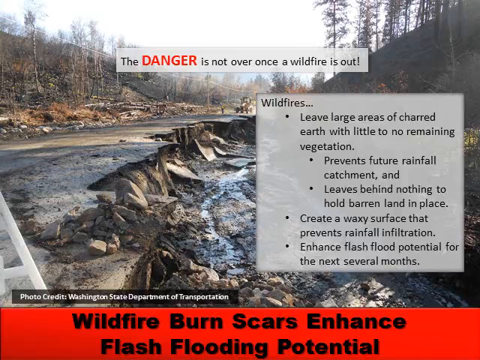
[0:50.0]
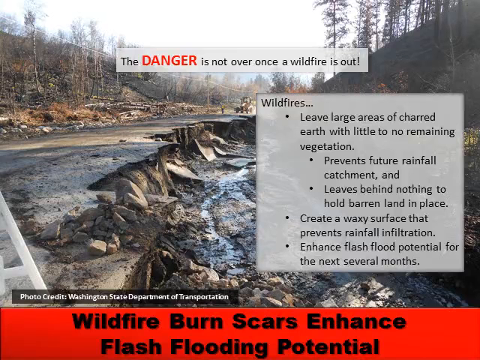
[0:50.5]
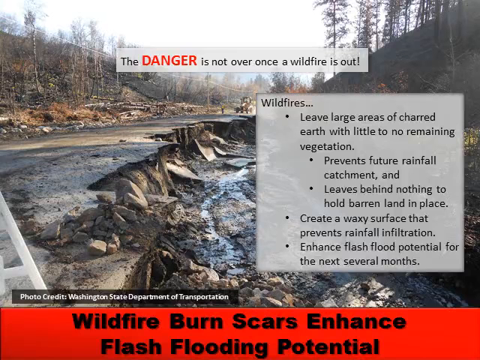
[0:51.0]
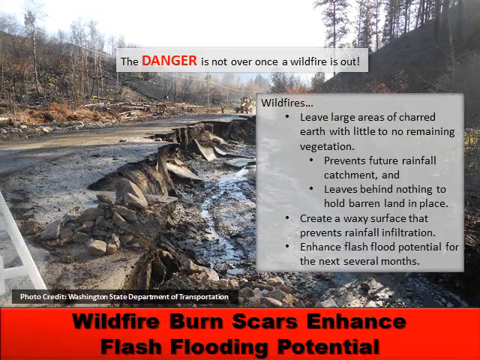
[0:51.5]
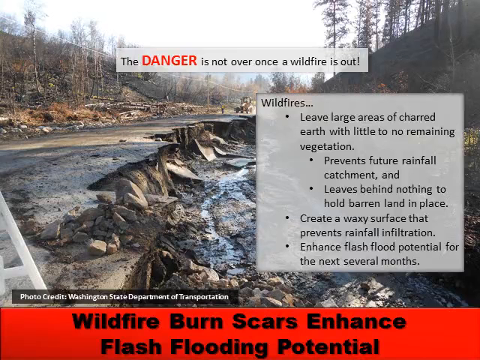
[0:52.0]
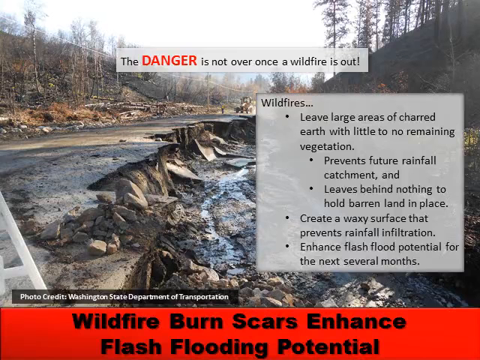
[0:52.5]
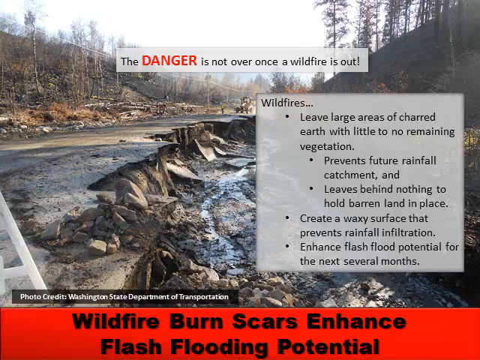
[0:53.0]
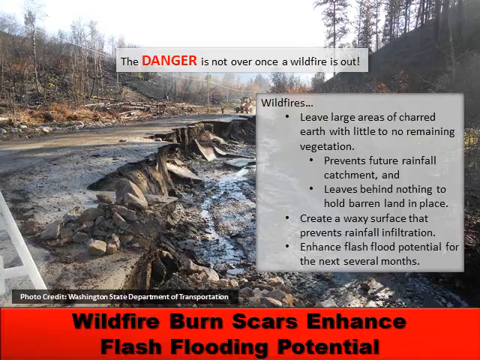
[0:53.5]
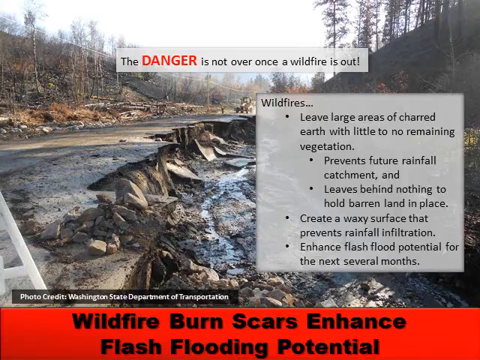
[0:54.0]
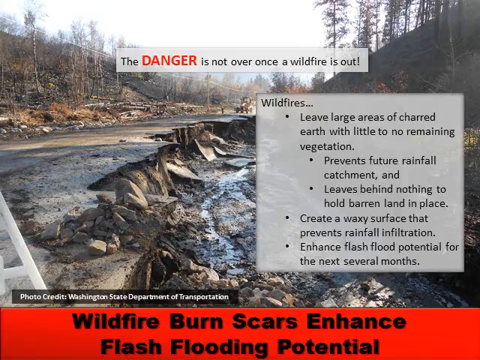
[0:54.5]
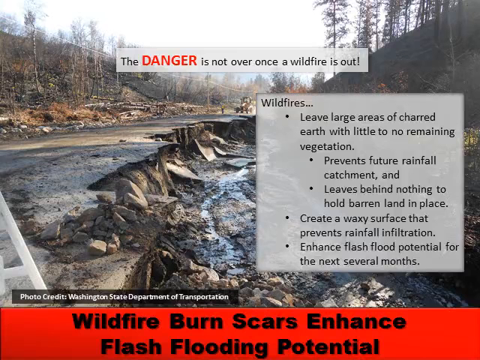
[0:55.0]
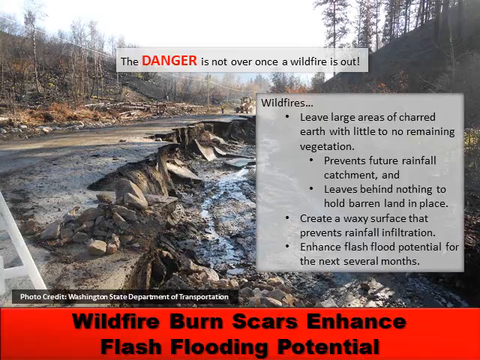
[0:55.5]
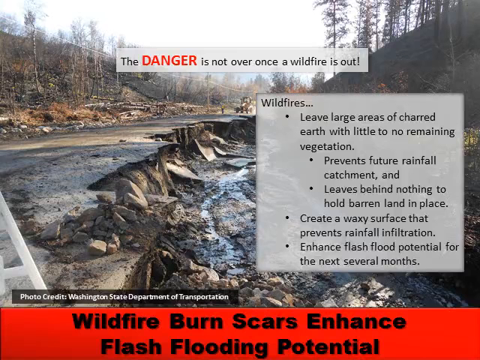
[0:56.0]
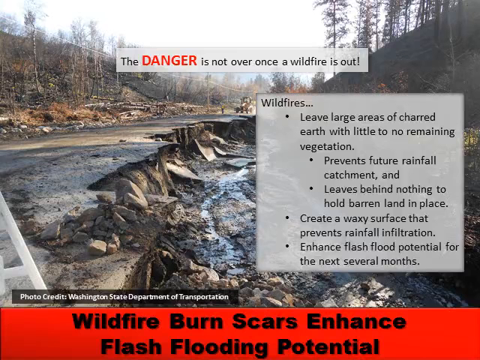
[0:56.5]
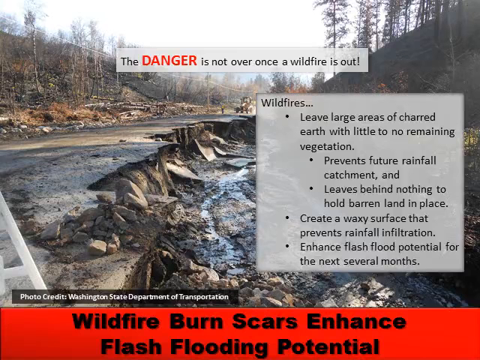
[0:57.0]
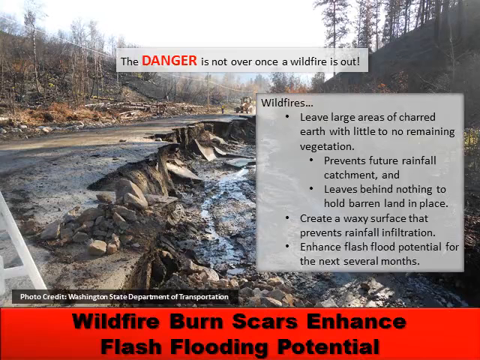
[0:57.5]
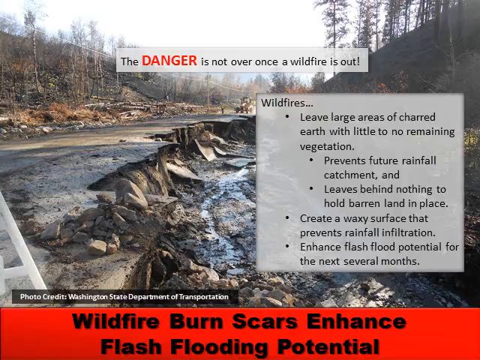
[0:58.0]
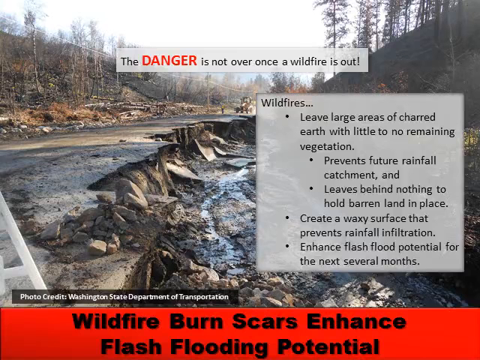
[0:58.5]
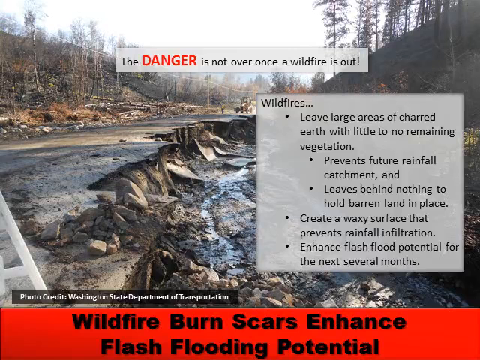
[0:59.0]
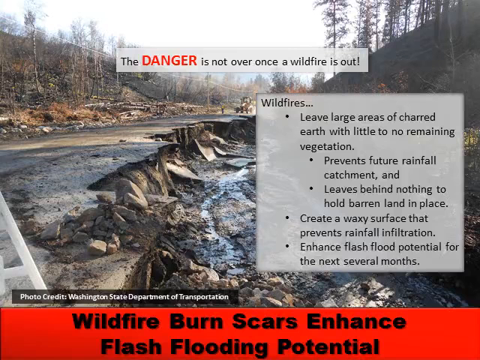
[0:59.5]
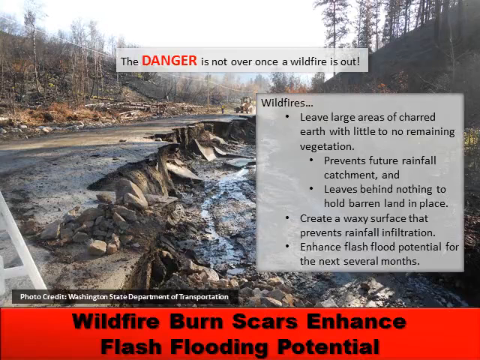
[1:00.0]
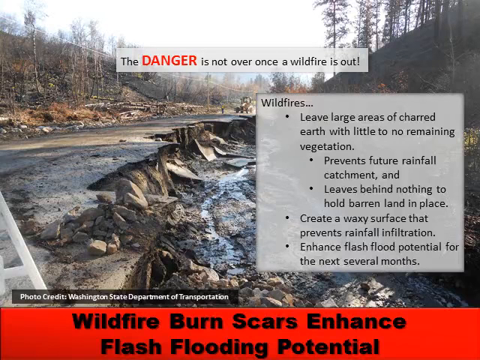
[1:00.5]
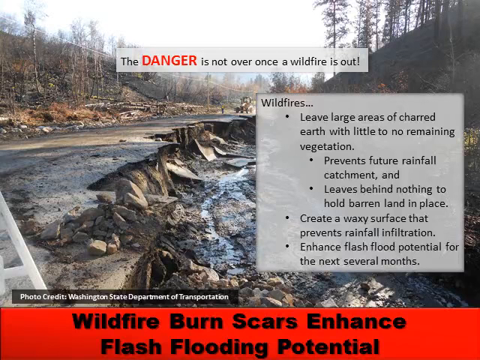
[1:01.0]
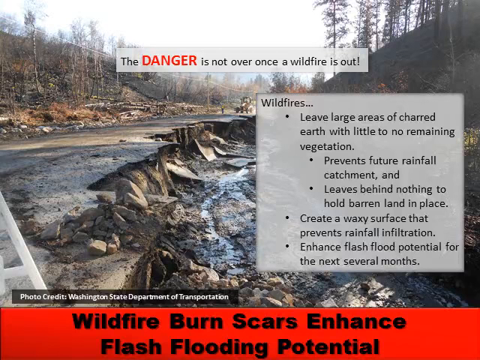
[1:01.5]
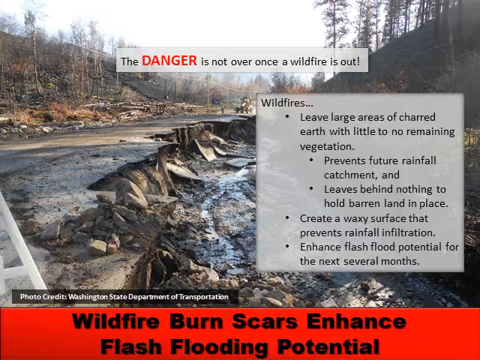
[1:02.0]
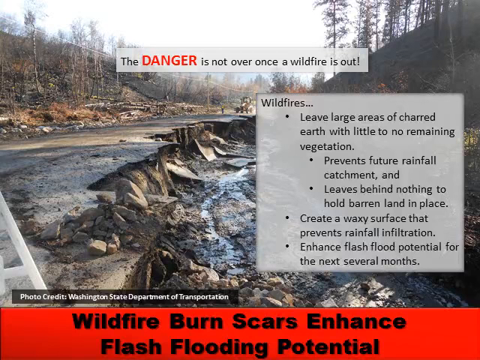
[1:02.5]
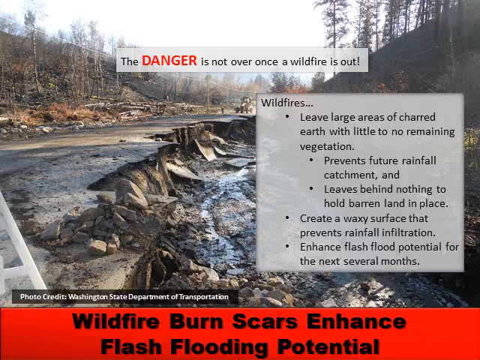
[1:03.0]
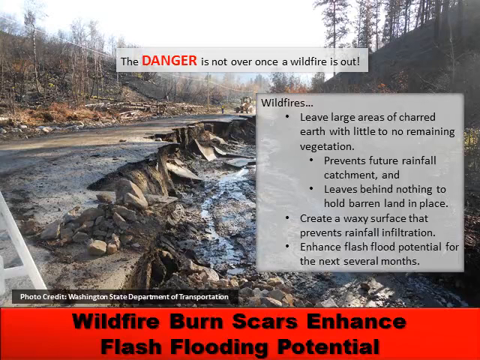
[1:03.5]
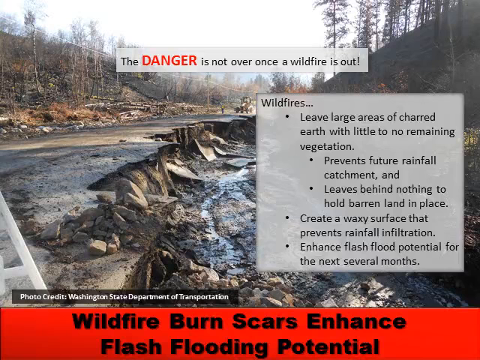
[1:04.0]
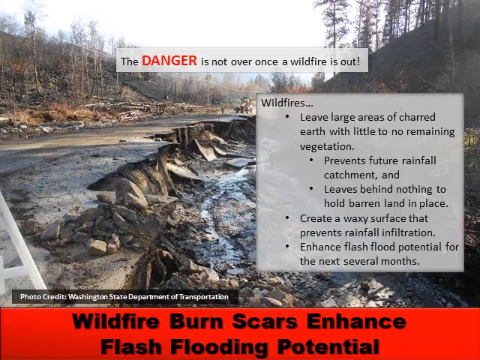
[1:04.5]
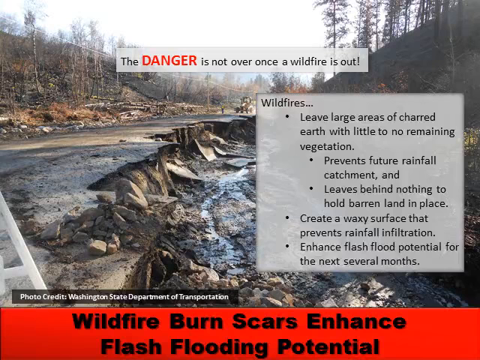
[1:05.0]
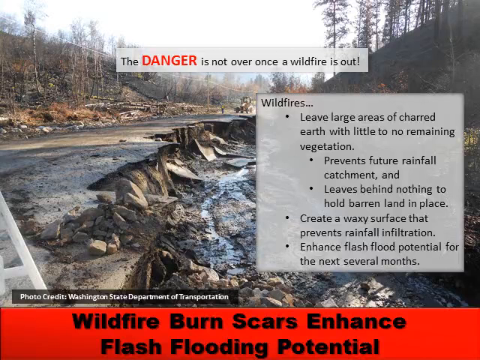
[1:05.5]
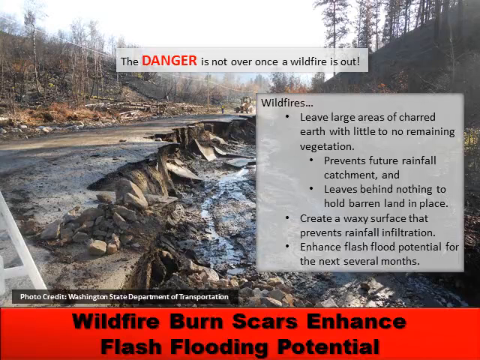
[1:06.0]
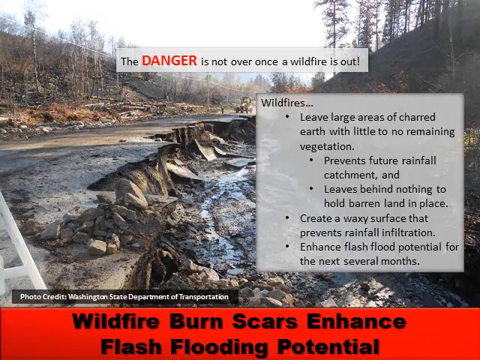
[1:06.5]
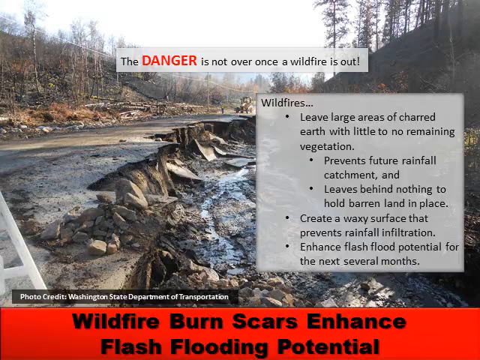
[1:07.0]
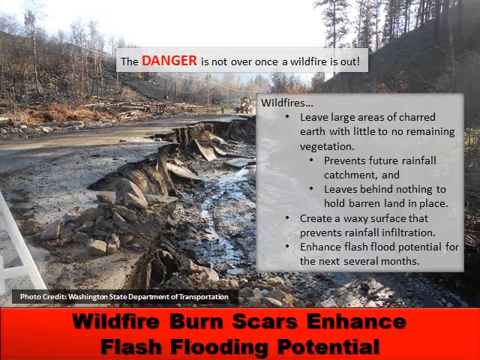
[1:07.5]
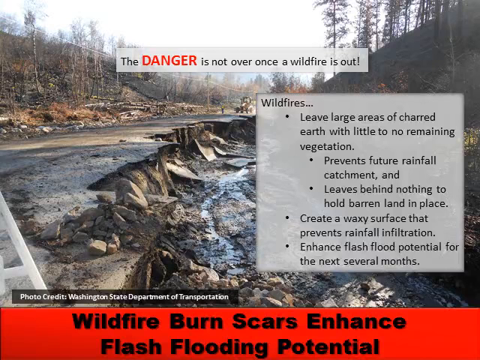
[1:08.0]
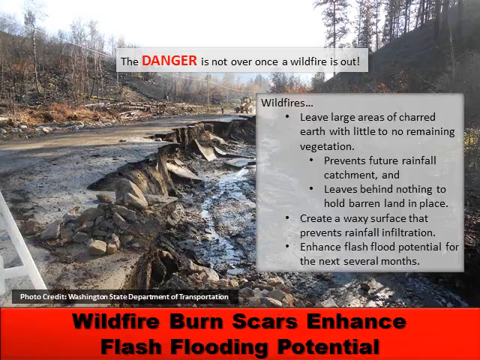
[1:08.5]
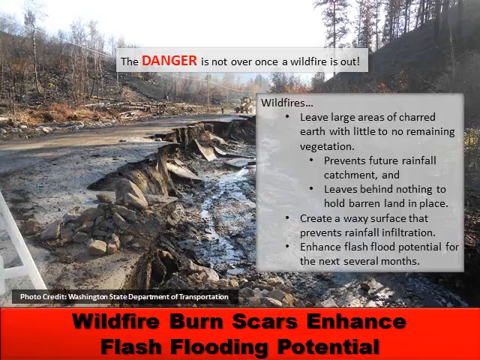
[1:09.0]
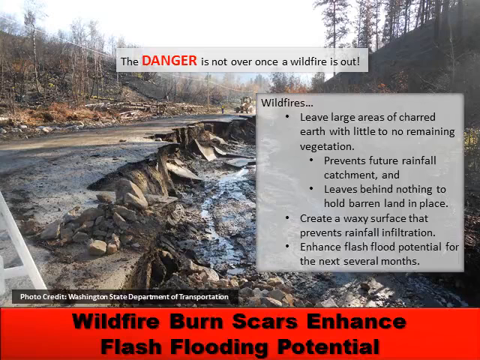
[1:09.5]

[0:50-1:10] The slide titled "Wildfire burn scars enhanced flash flooding potential" stays on screen with the same picture and text. The photo appears to show a wilderness with a natural road that has been cleared out. To the right of the road is a dried-out creek. The side of the road is jagged, with many sharp pieces and rocks sticking out, and there is maybe a five-foot drop down to the dried-out creek. Hillsides on the left and right of the road are covered with semi-bald trees and some dry brush. The photograph was taken in the daytime, and there appears to be a bit of haze over the hillside.